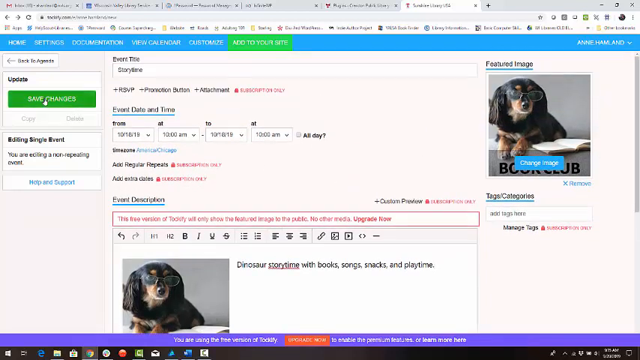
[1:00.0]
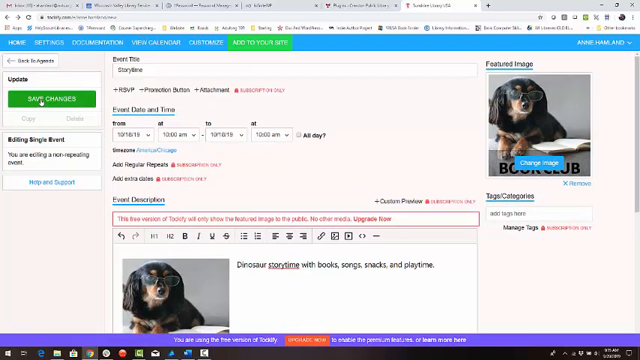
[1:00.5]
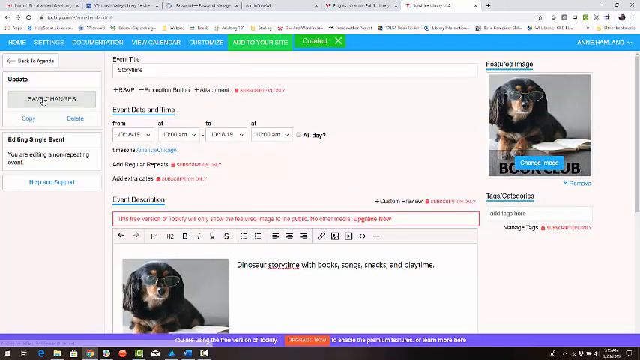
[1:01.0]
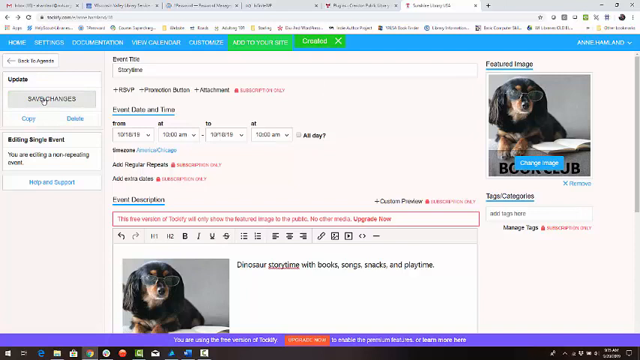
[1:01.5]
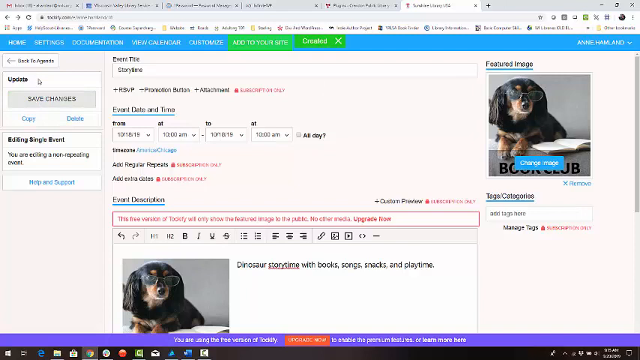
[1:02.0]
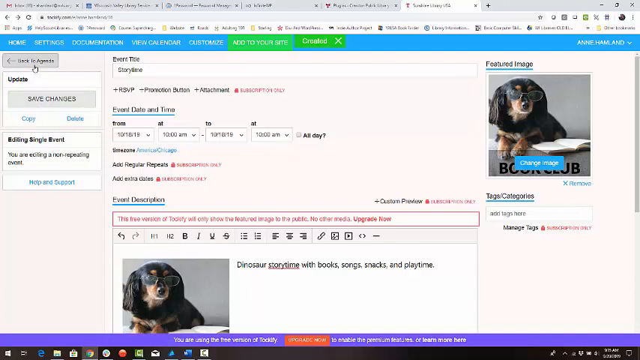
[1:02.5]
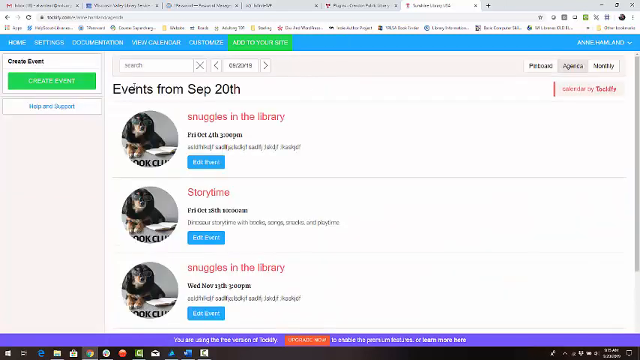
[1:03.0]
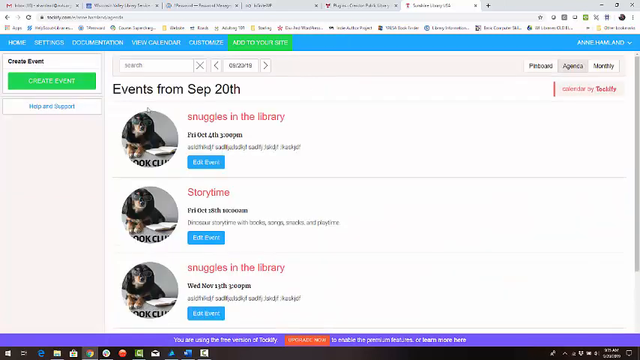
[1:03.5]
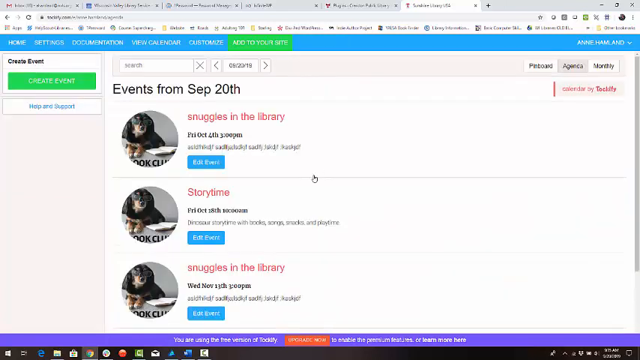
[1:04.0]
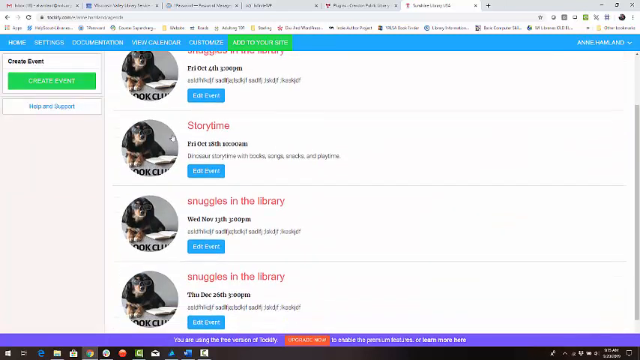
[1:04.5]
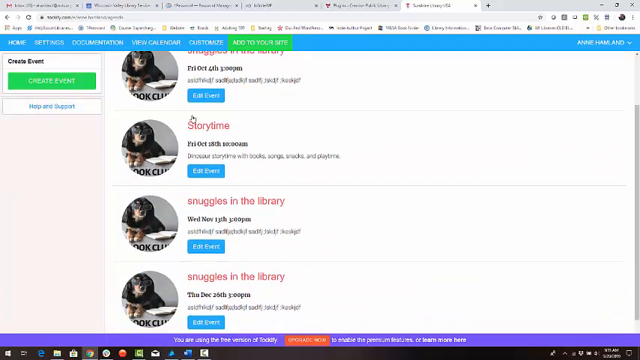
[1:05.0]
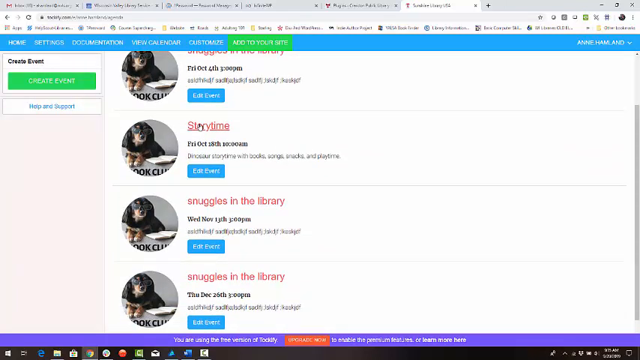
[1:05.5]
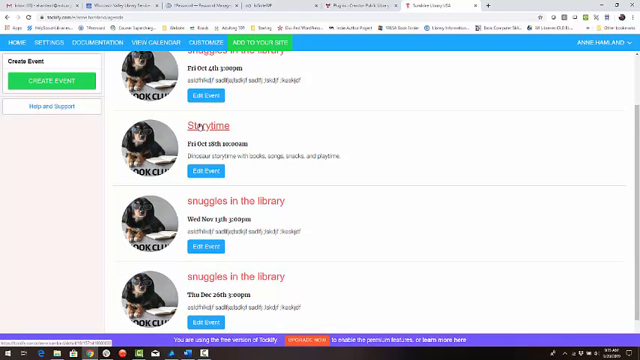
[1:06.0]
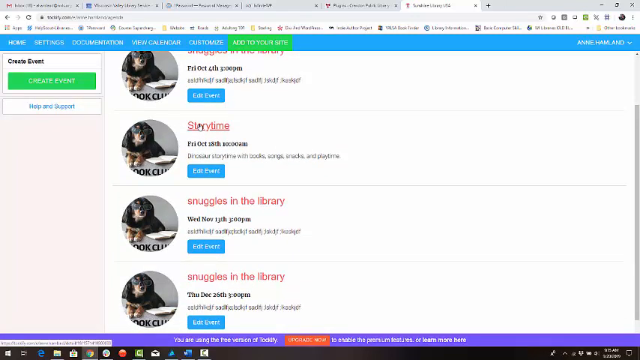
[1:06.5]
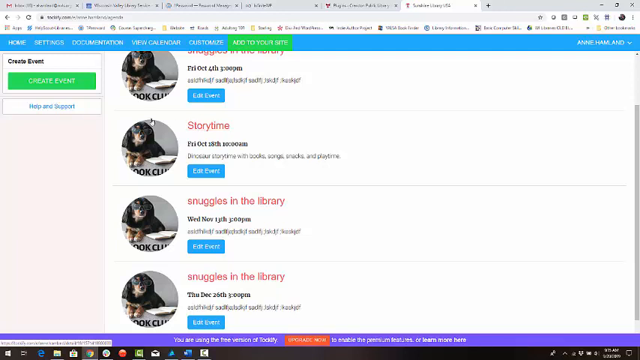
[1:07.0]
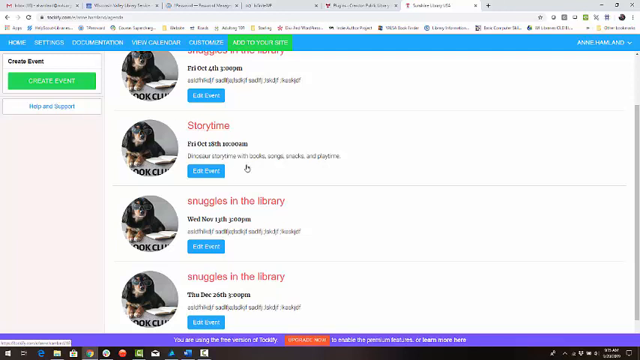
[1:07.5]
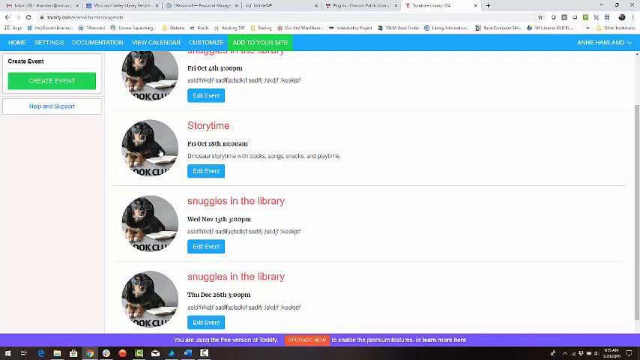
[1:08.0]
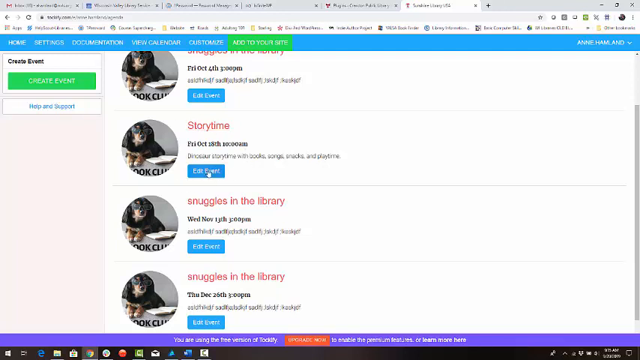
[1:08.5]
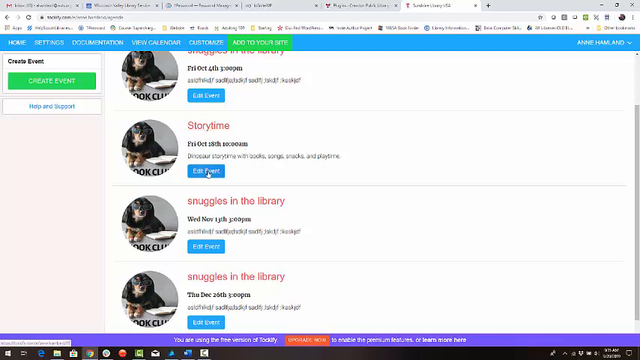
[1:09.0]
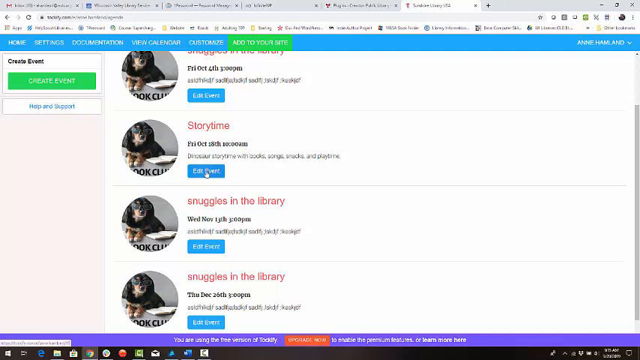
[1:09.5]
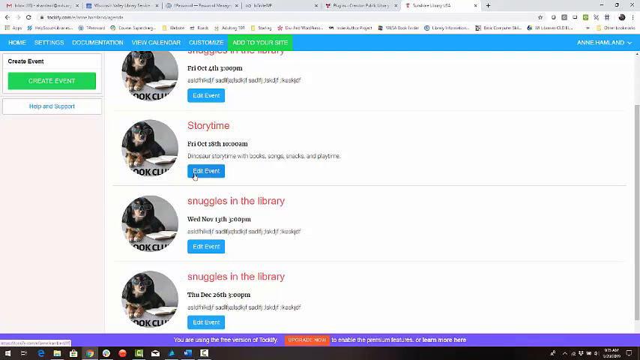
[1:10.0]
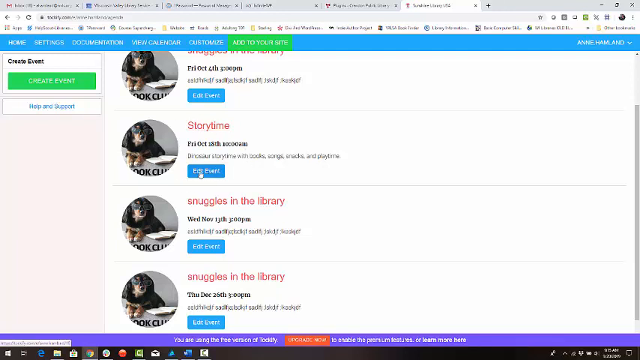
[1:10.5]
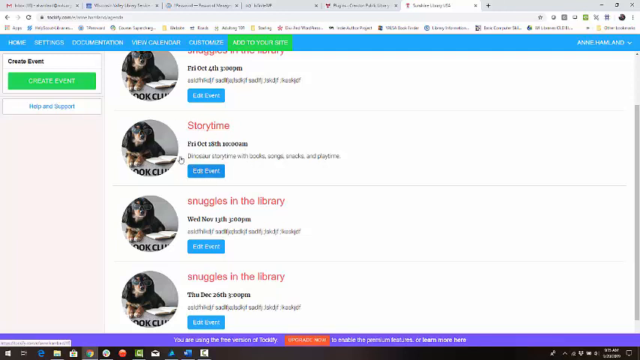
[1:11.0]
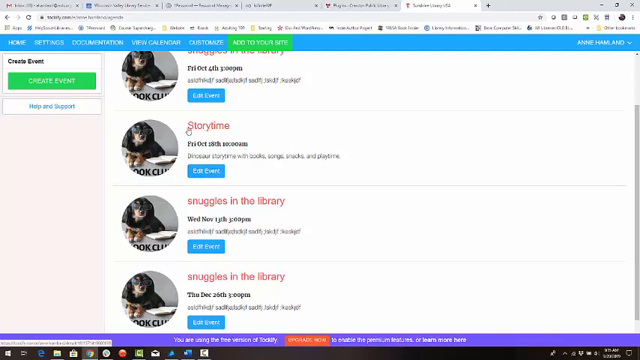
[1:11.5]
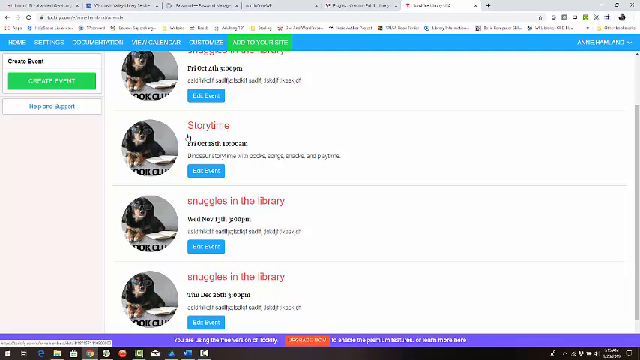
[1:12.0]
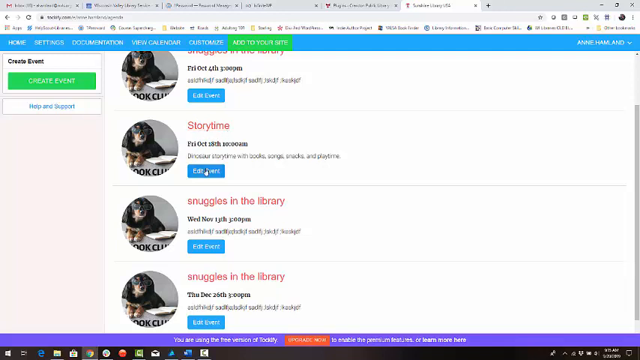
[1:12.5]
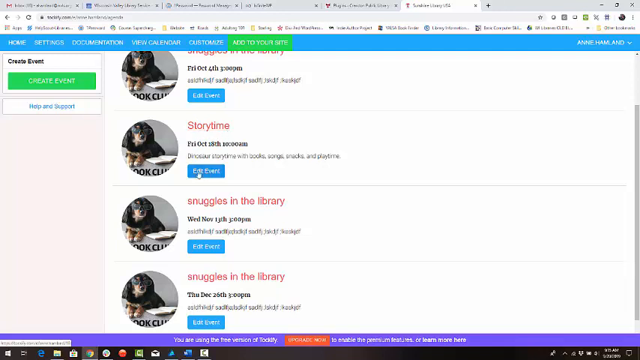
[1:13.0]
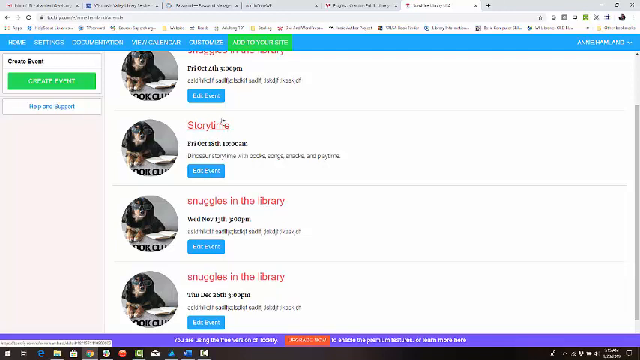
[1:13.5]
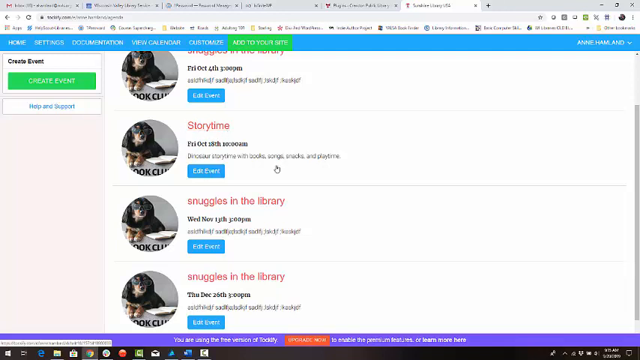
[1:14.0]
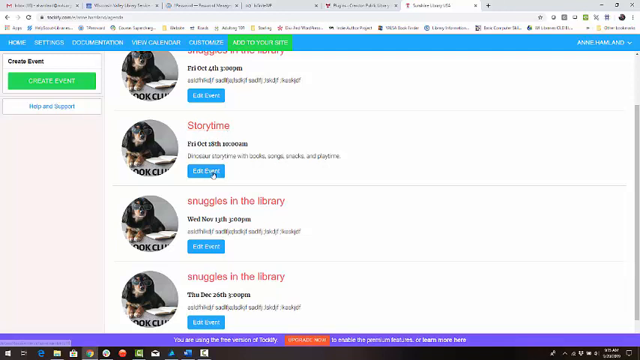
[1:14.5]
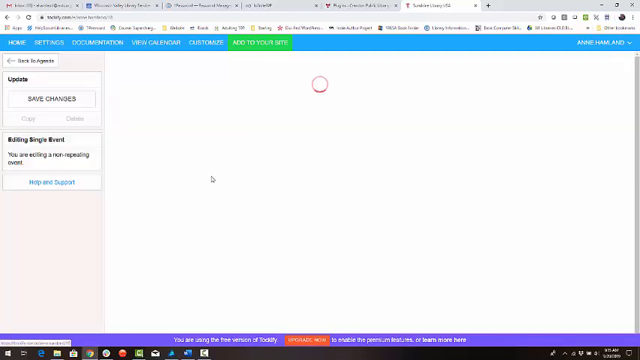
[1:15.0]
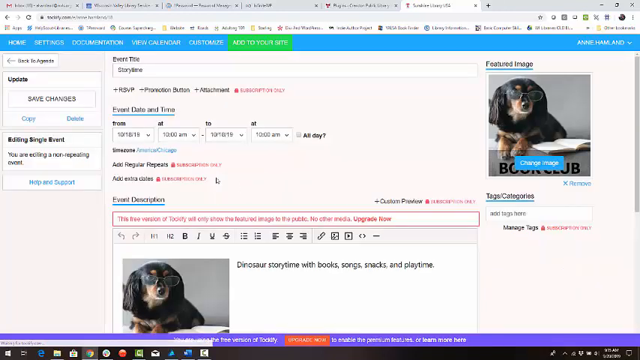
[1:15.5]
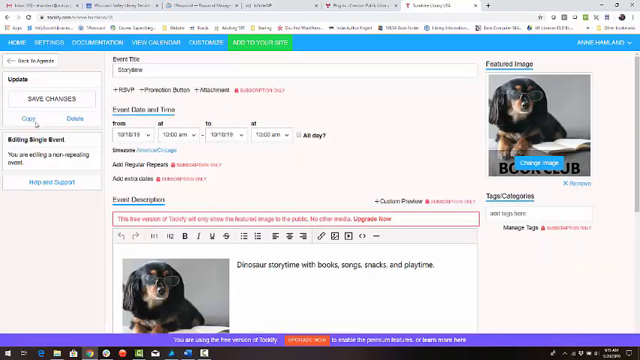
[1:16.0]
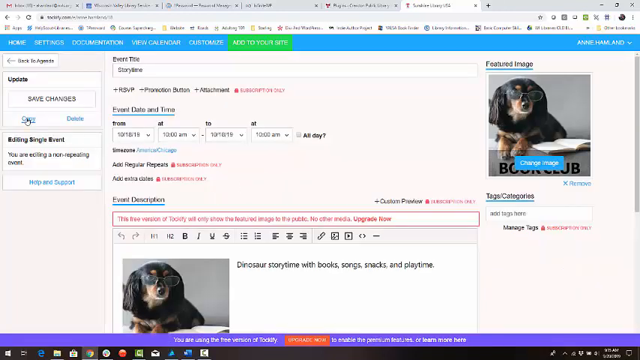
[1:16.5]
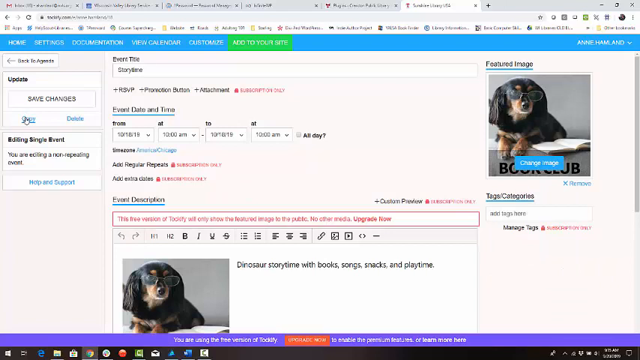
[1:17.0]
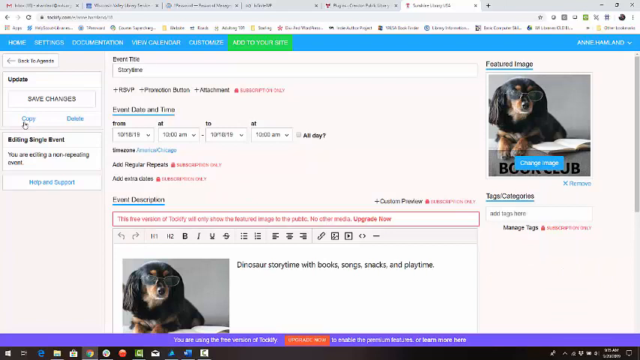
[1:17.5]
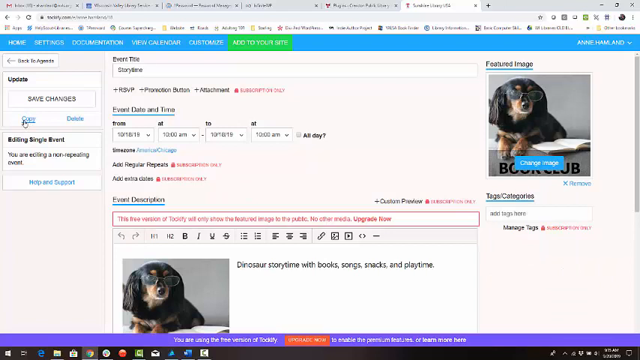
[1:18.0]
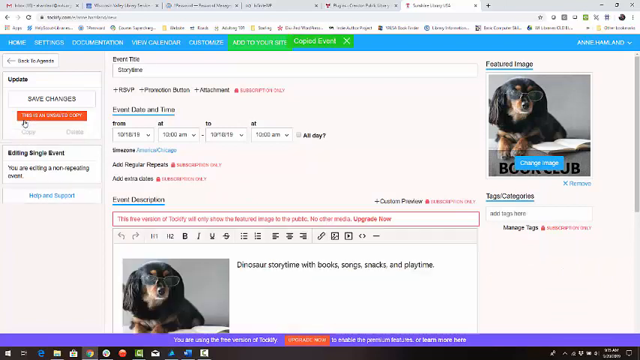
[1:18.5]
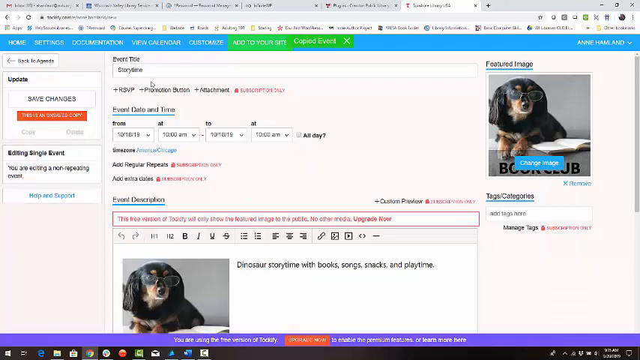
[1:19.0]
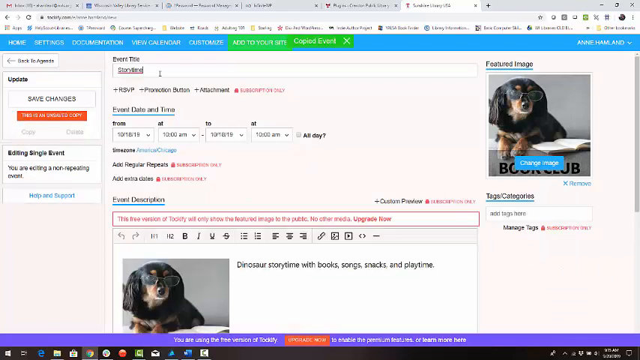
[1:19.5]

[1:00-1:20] The website shows a word processor with images of a dog, and under the dog image is black text reading "book club." At the top is a menu with a blue bar behind it, and beneath it is a gray button. The cursor is over the button, and the person seems to click it. The site navigates to a window with the header "events from September 20th," and underneath are many pictures of the same dog, almost like a profile picture. To the right are different options; the cursor hovers over one reading "story time," which seems to be a link. Under "story time" is some text and then a blue button, which the cursor hovers over and clicks. This leads to another page showing the dog inside a word processor. On the top left, the mouse hovers over blue text reading "copy" and clicks it. Some text changes and a red button appears; they click it, and the site seems to navigate back to the "events from September 20th" page.